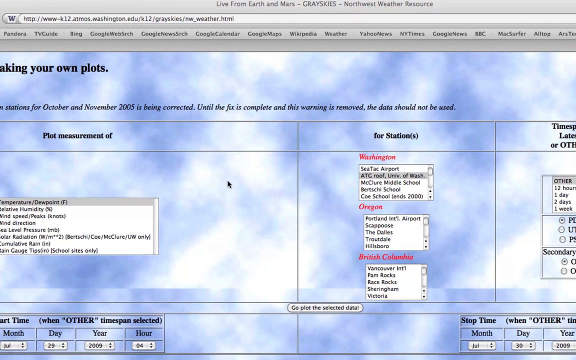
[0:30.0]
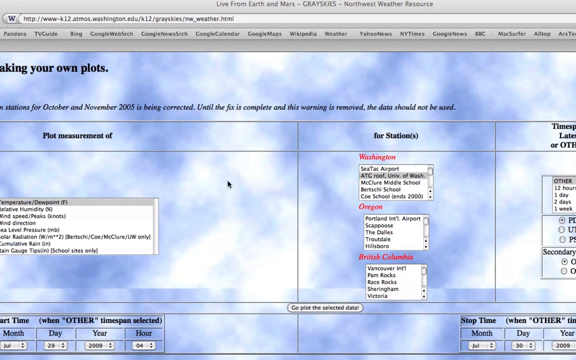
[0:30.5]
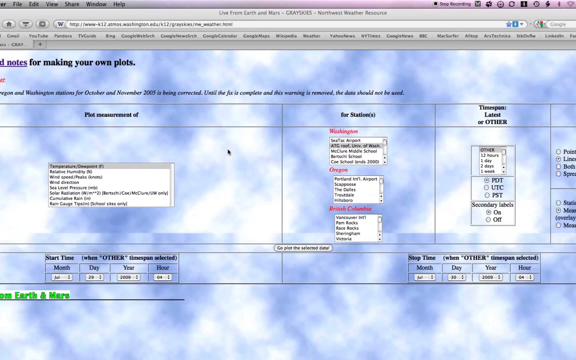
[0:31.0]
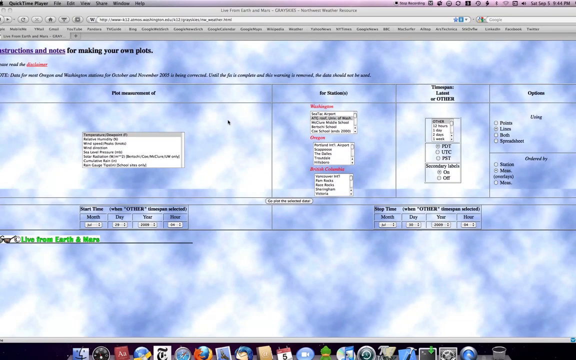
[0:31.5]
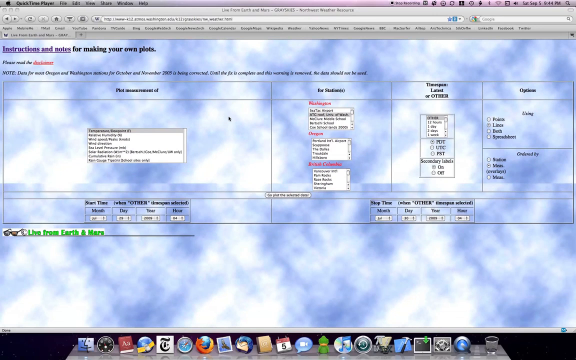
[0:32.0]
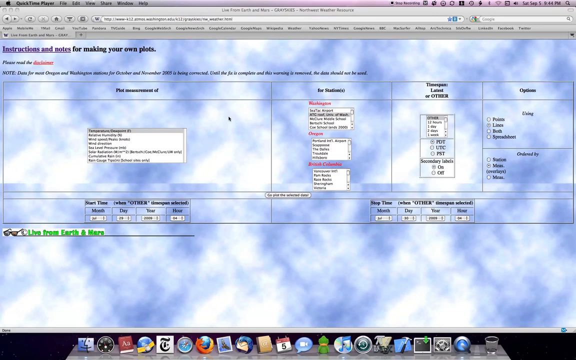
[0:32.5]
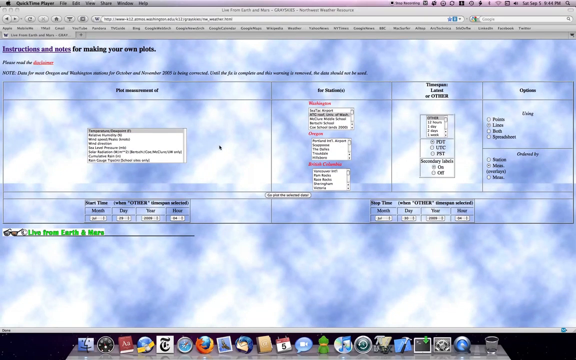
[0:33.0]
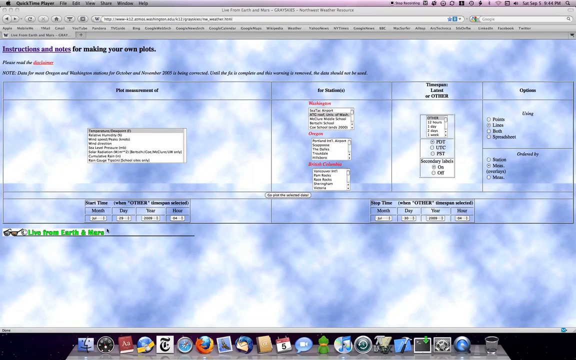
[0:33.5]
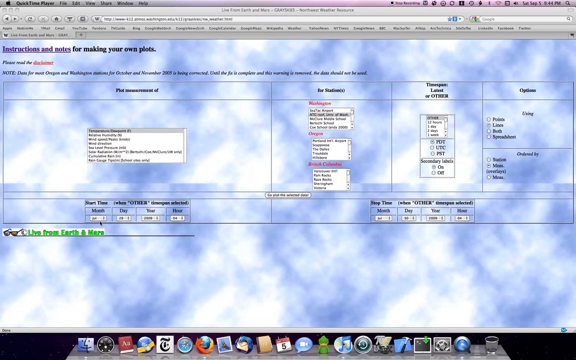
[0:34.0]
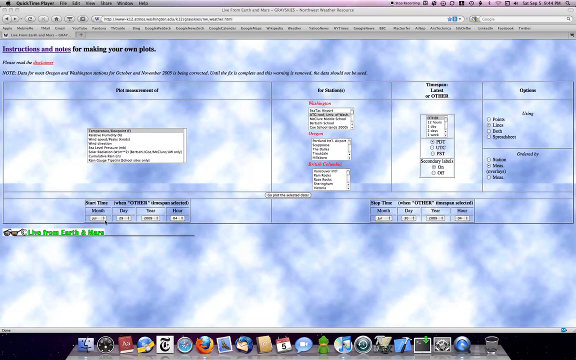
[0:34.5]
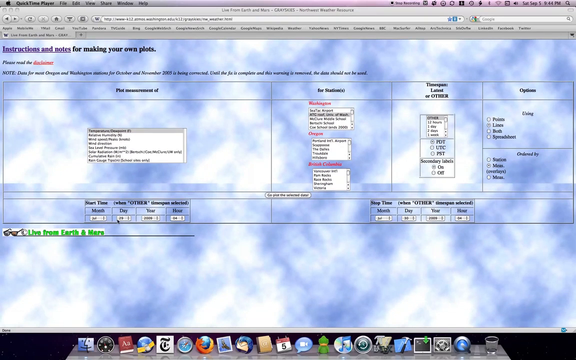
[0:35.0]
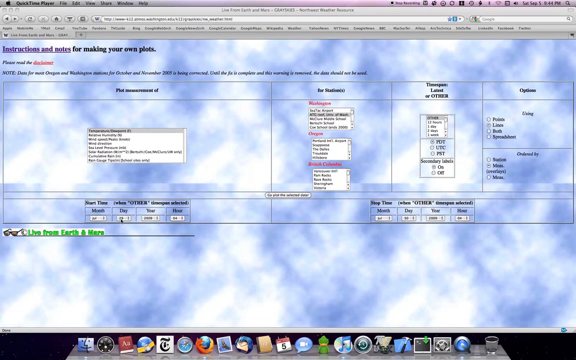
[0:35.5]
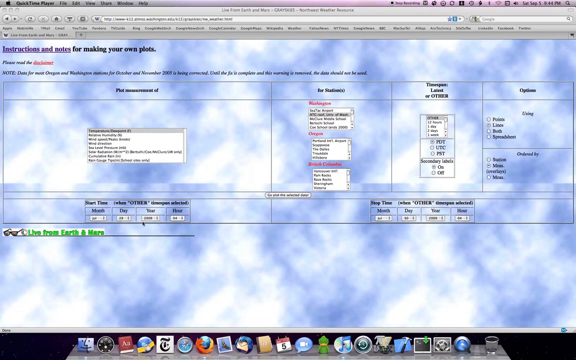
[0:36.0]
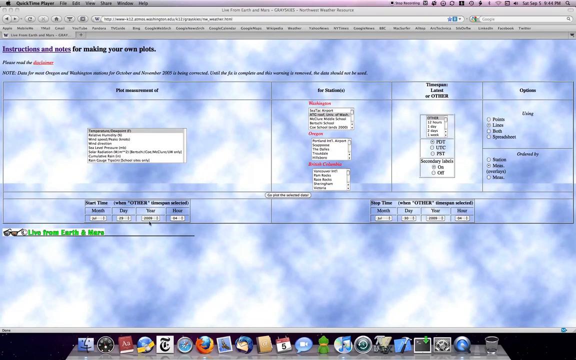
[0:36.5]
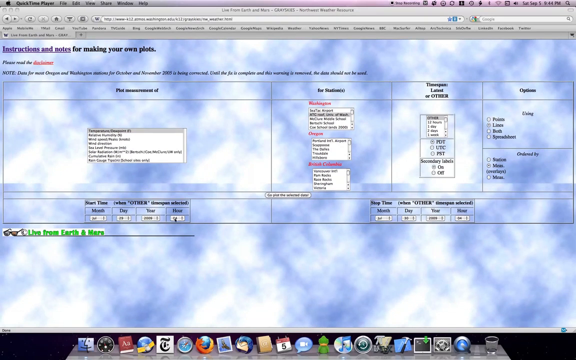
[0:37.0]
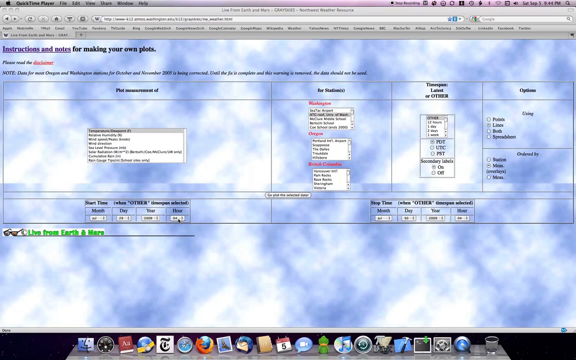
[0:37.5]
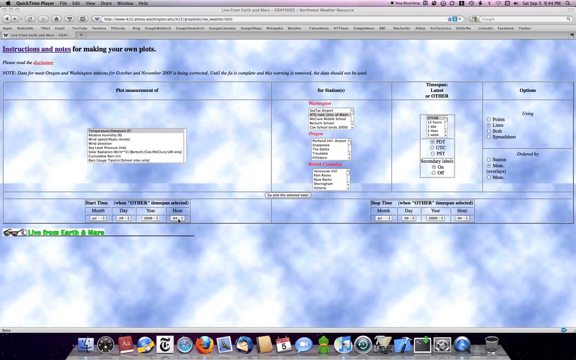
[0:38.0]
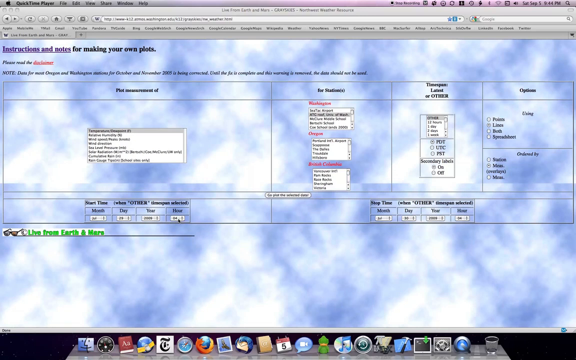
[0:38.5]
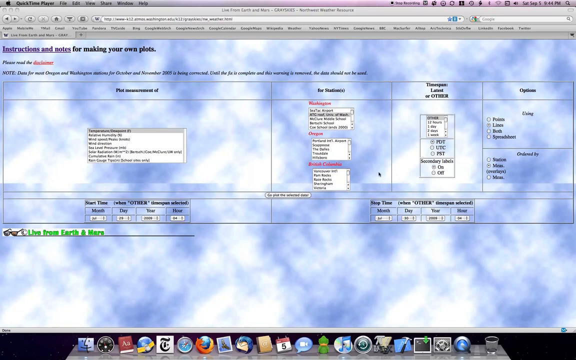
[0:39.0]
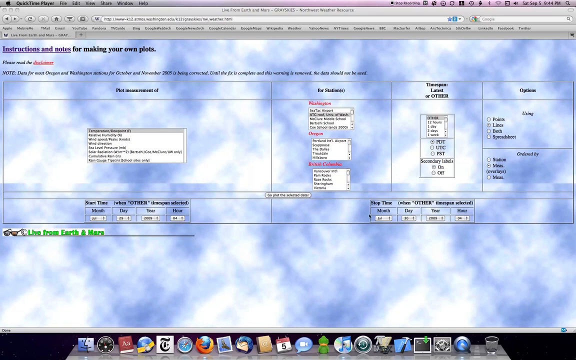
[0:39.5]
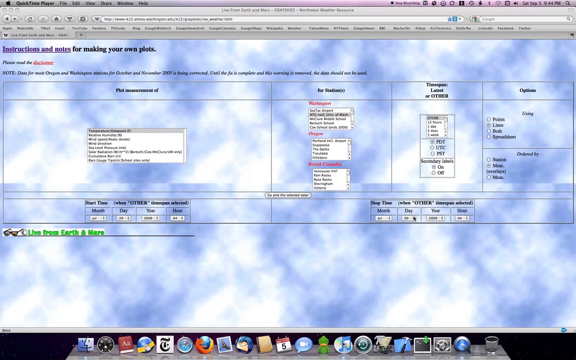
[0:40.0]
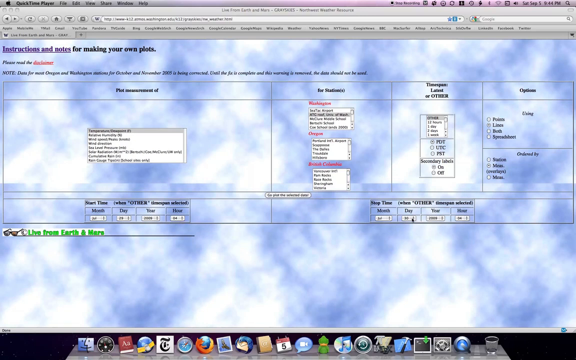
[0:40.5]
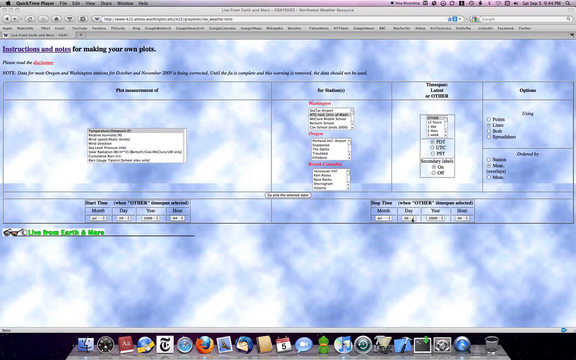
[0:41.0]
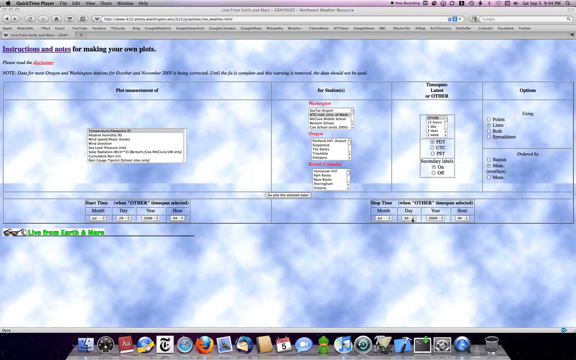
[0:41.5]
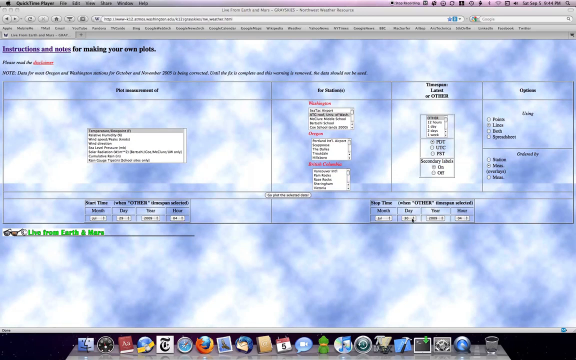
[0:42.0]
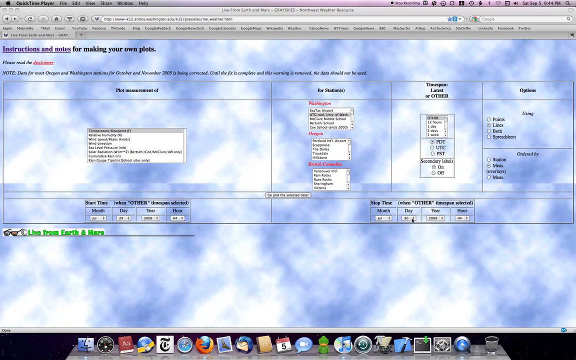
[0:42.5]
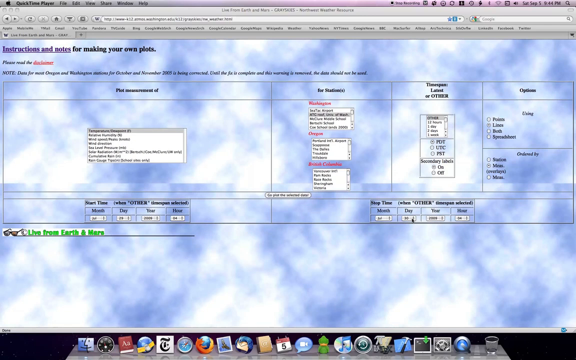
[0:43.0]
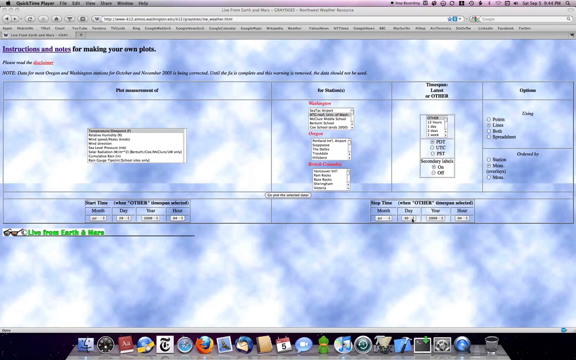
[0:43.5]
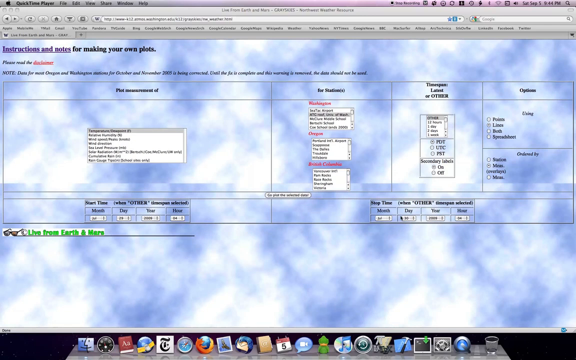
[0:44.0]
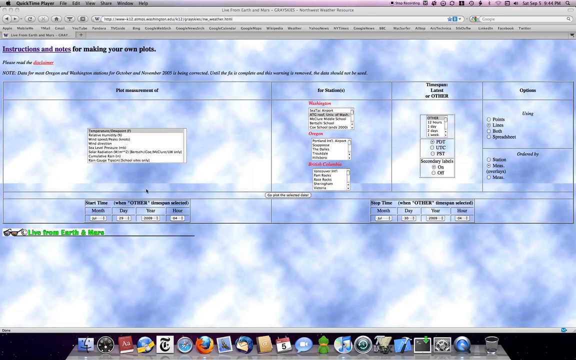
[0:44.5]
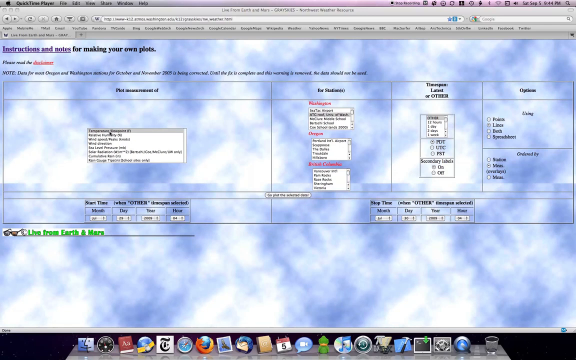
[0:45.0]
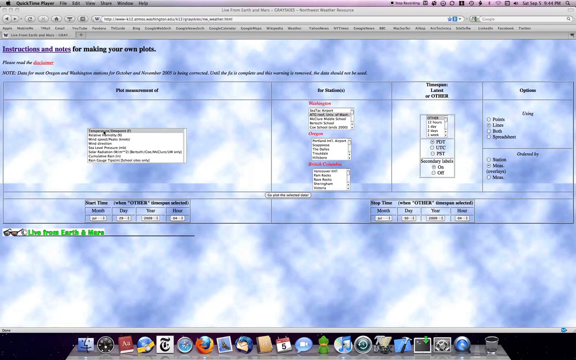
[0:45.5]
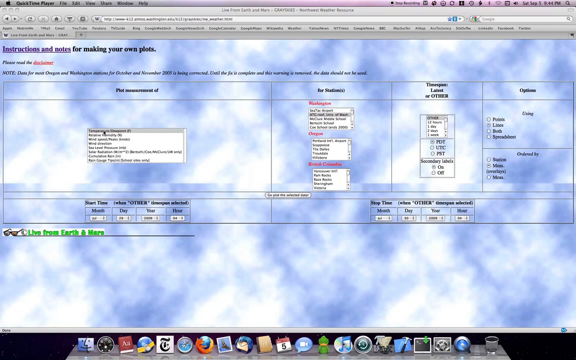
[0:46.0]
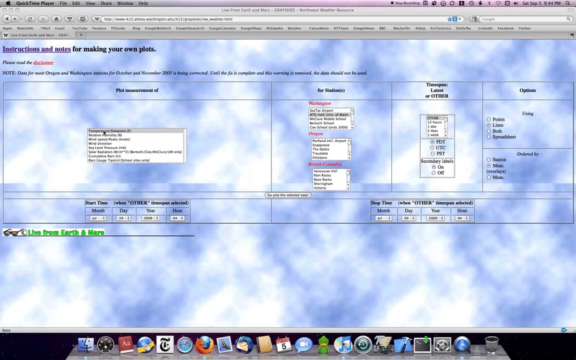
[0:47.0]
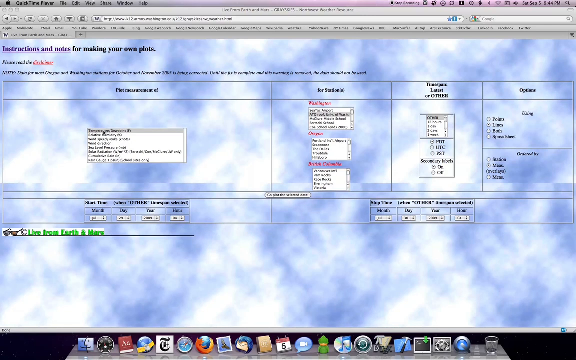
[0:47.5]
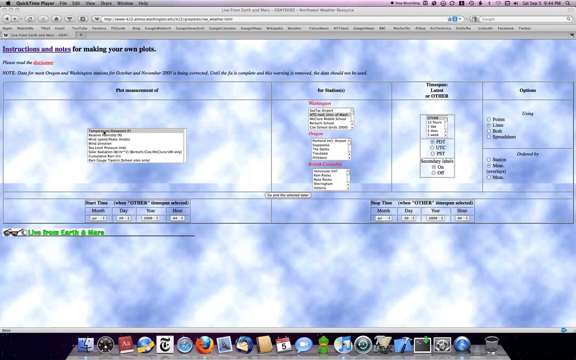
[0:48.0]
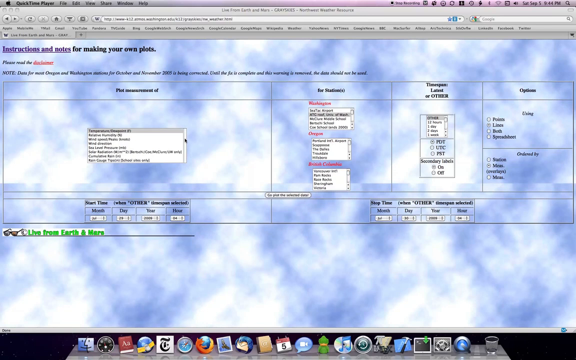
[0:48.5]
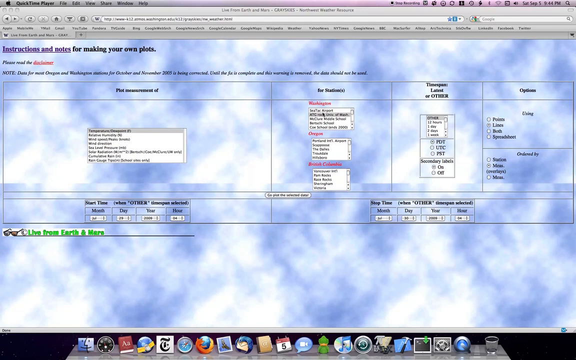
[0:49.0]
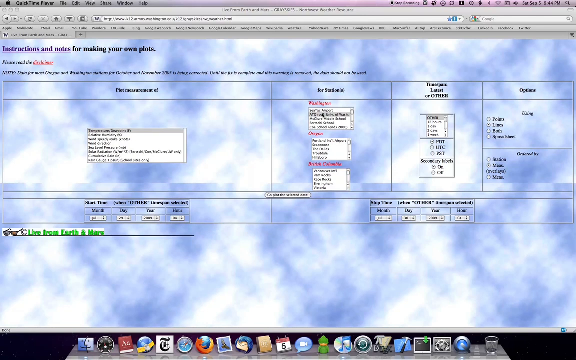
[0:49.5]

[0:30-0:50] The background of the program on the computer has a light blue sky and white clouds kind of image, and the view zooms out to show the full page. The cursor hovers over an area that says "start time, month, day, year and hour," then moves to the box next to it that says "stop time, month, day, year" and "hour." The mouse then hovers up and over the different drop-down boxes with options for the application: one is for the plot, the other for stations. The station options appear to be Washington, Oregon and British Columbia, with multiple different cities inside each in the drop-down. Zoomed in closer, the Washington stations are Seatrack Airport, University of Washington and McClure Middle School; Oregon has Portland International Airport; British Columbia has Vancouver, Pam Rocks, Race Rocks and Victoria. These apparently are different places that have weather stations, as the web address refers to greyskies weather.